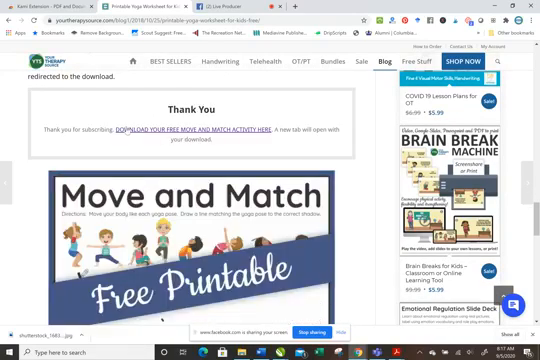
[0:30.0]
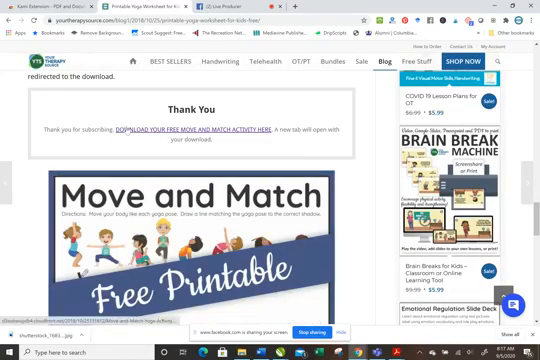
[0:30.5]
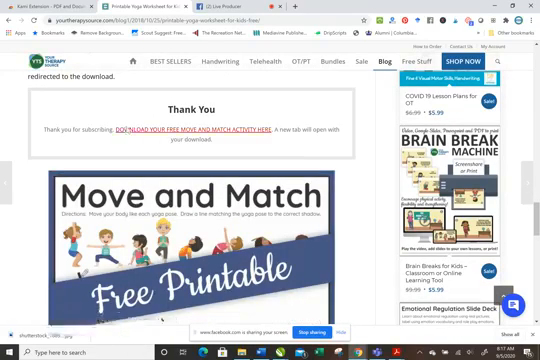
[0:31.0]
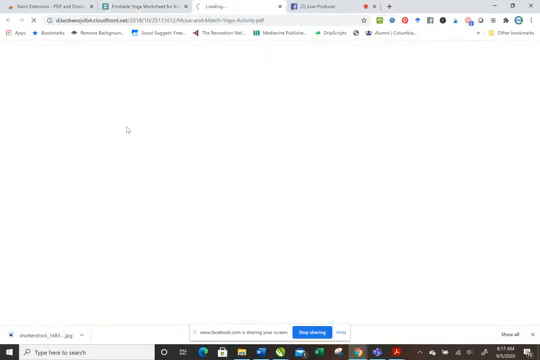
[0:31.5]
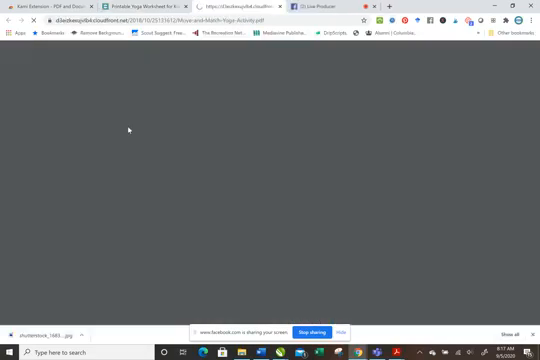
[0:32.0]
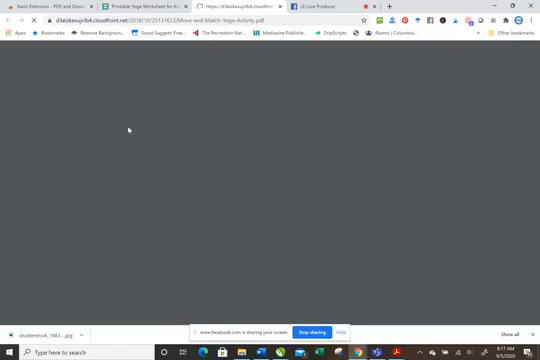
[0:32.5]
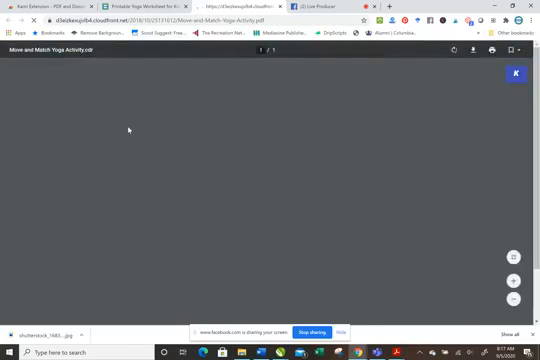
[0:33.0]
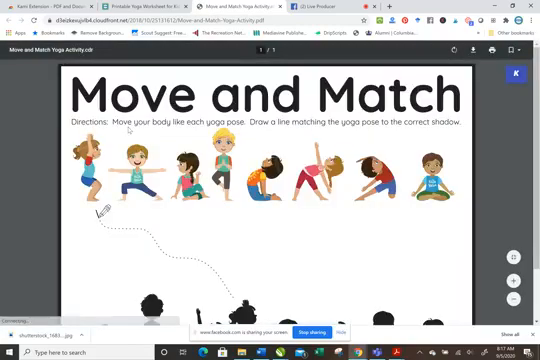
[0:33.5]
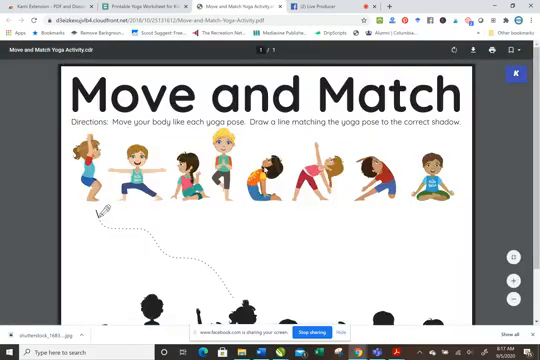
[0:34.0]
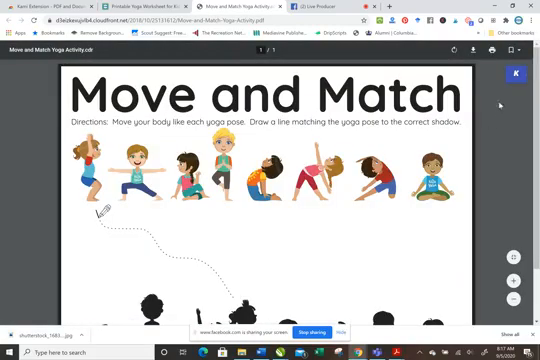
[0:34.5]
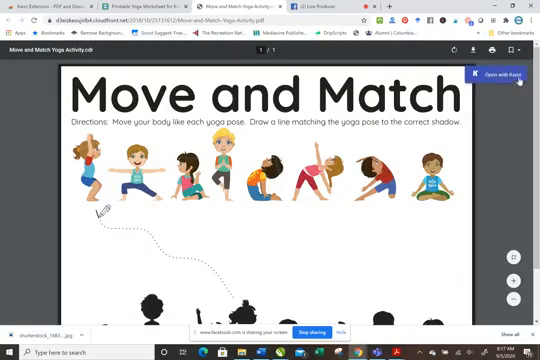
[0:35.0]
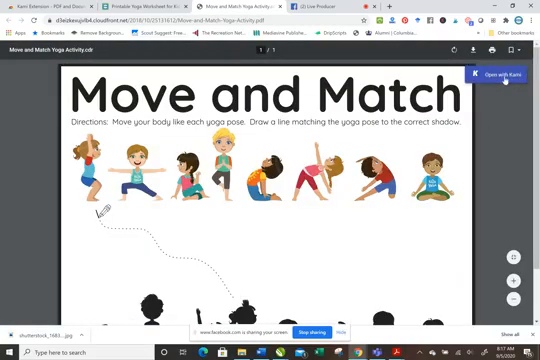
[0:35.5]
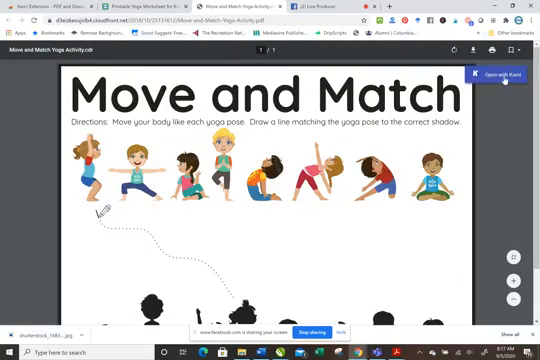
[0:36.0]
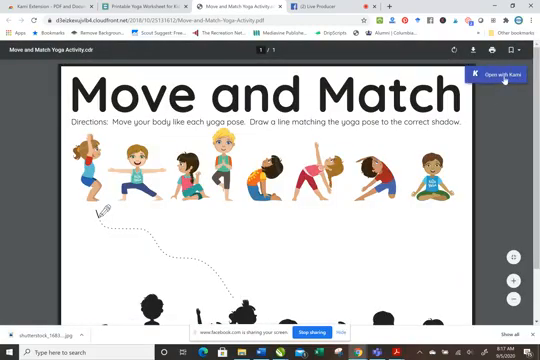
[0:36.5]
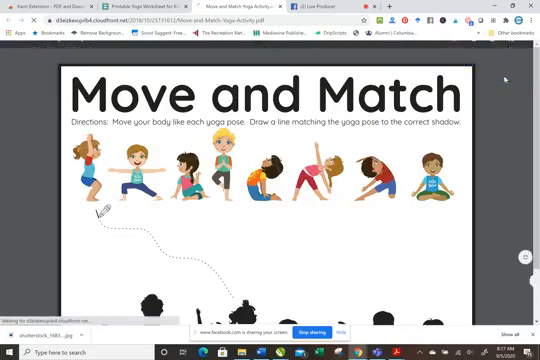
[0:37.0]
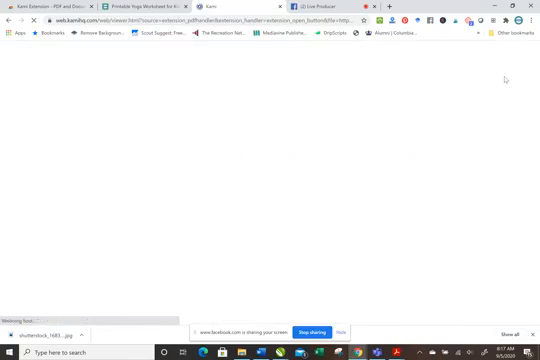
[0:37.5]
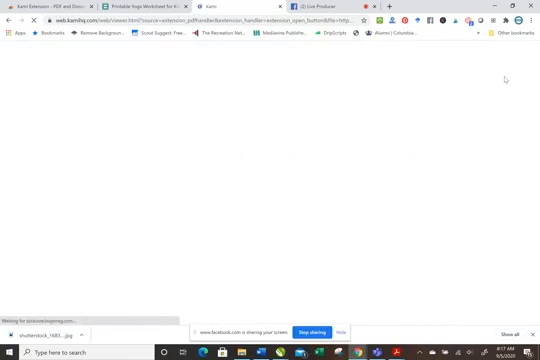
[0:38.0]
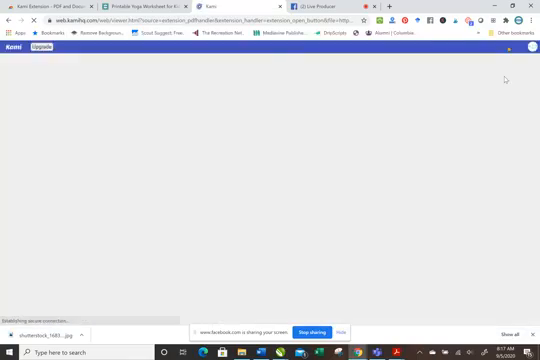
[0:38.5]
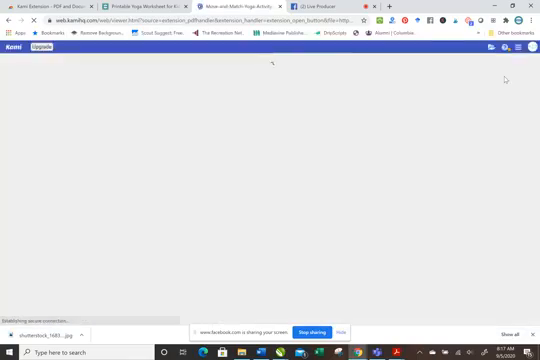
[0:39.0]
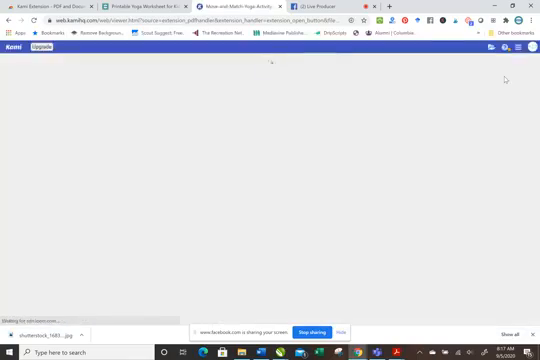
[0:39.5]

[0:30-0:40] The free Move and Match yoga activity has been clicked on, and it shows multiple yoga poses. Its directions include "move your body like each yoga pose" and "draw a line matching the yoga pose to the correct shadow", along with other activities. Right under the Move and Match title are multiple cartoon characters, 4 girls, 2 women and 2 boys, all doing different yoga poses. Below them are shadow outlines for the game of matching the poses to the shadows. Something is then clicked, and a tab for the extension opens.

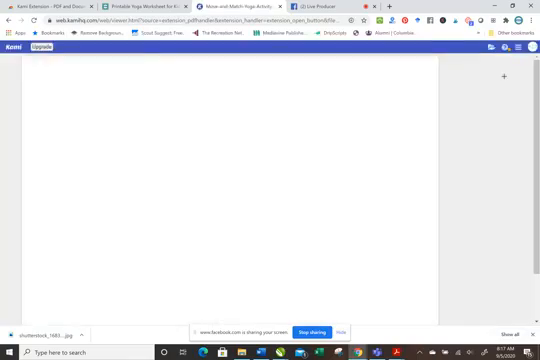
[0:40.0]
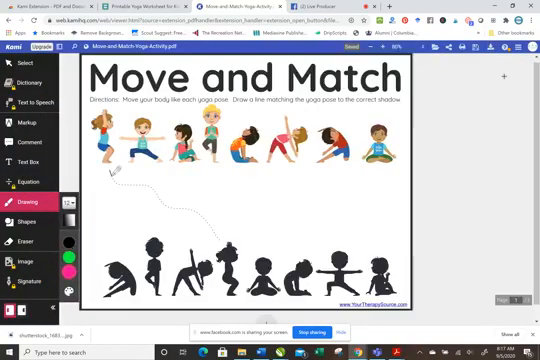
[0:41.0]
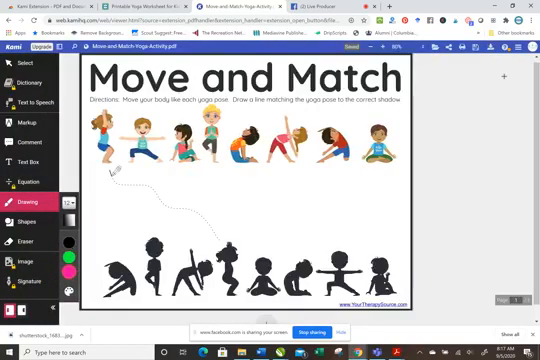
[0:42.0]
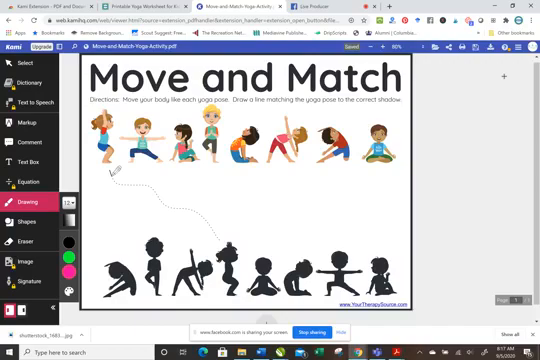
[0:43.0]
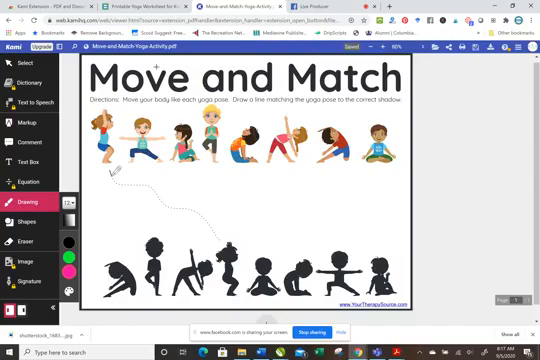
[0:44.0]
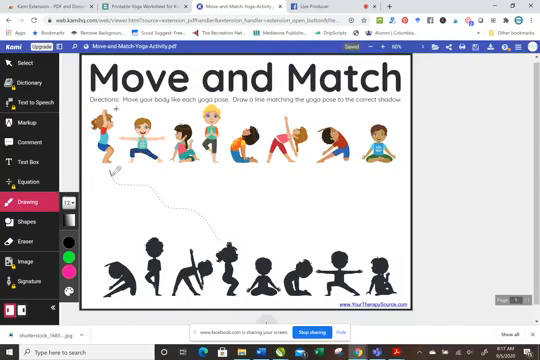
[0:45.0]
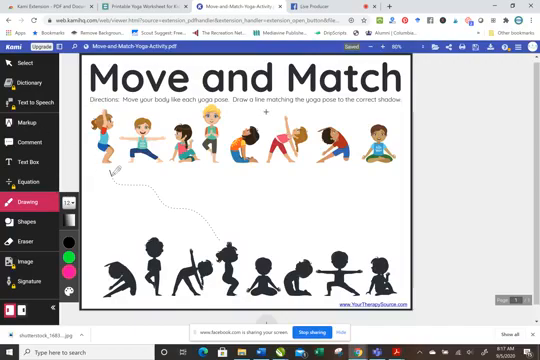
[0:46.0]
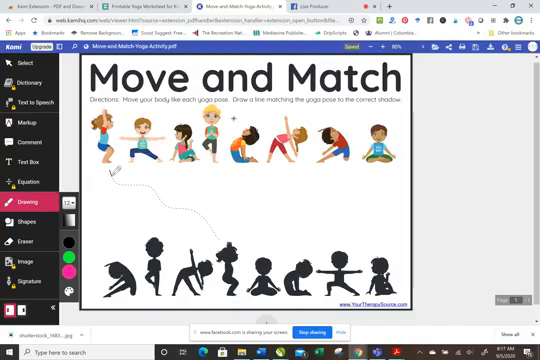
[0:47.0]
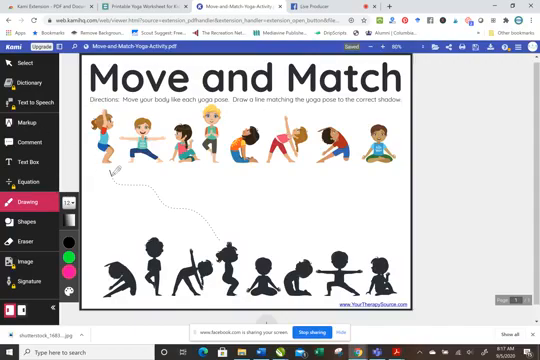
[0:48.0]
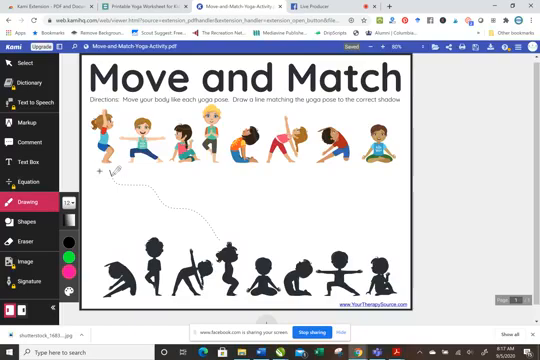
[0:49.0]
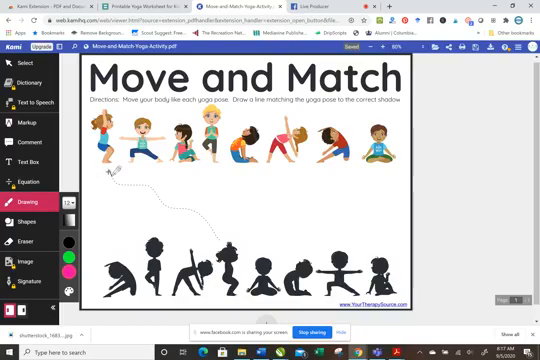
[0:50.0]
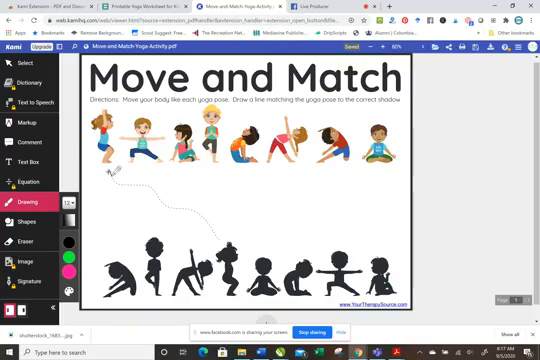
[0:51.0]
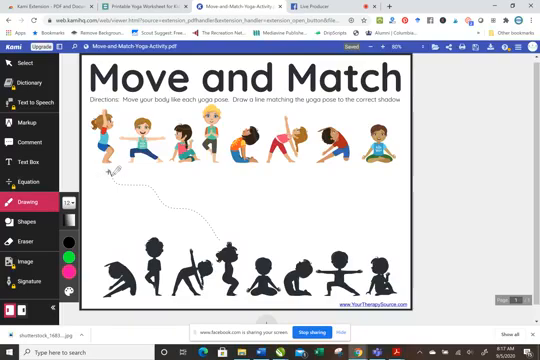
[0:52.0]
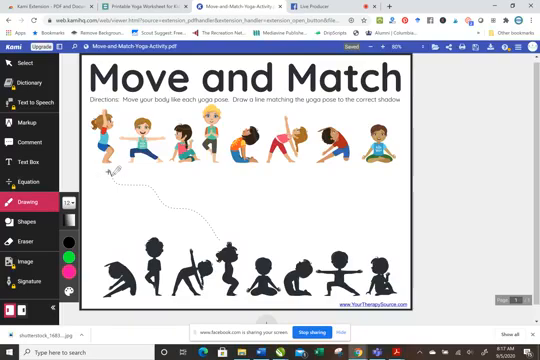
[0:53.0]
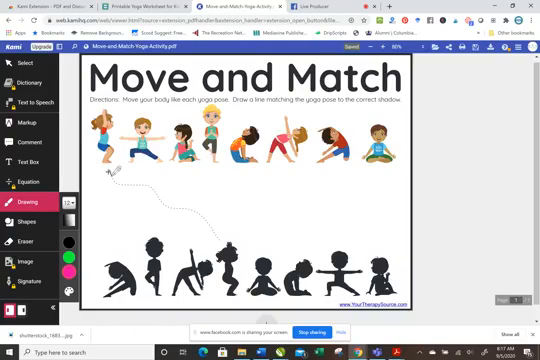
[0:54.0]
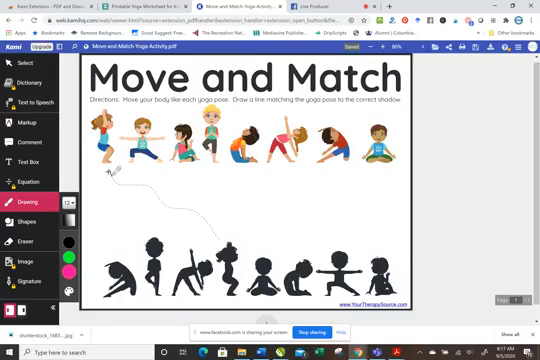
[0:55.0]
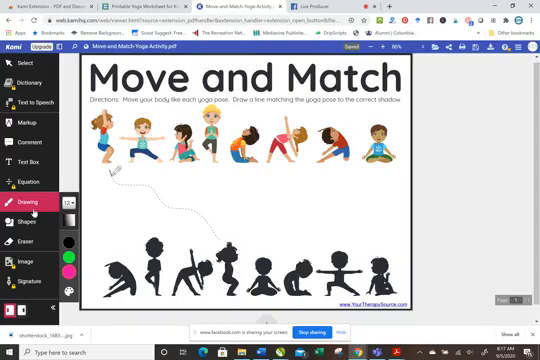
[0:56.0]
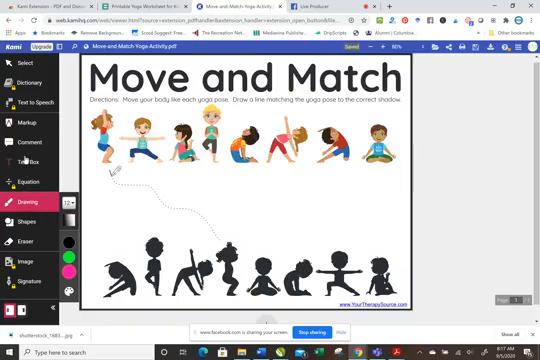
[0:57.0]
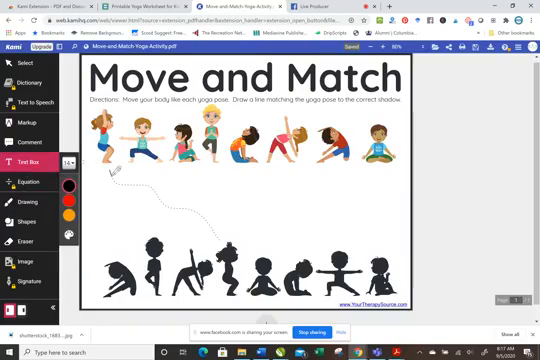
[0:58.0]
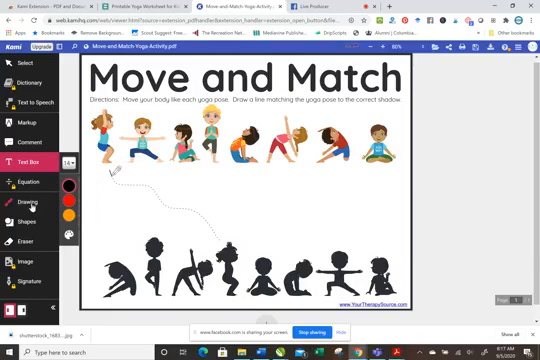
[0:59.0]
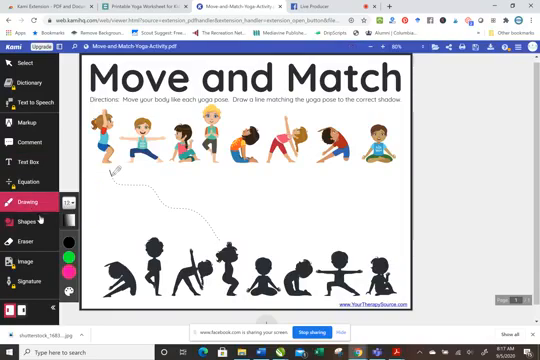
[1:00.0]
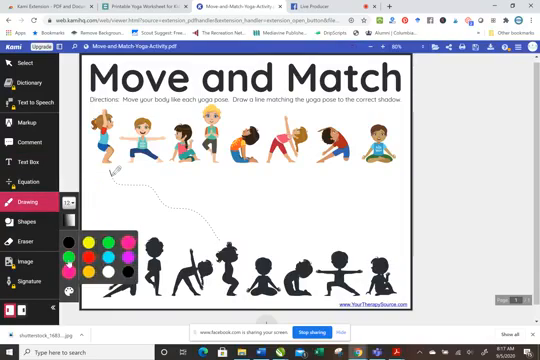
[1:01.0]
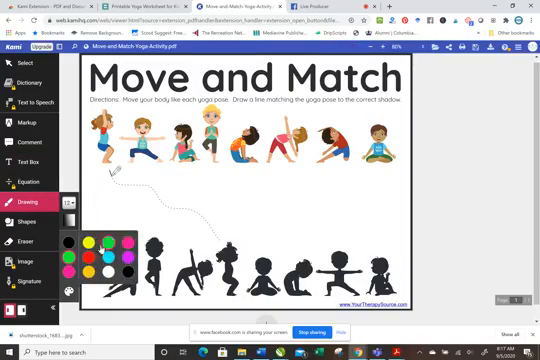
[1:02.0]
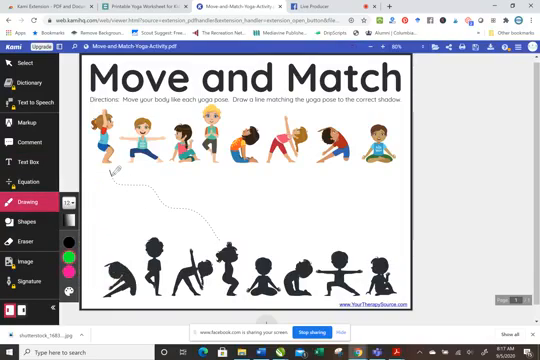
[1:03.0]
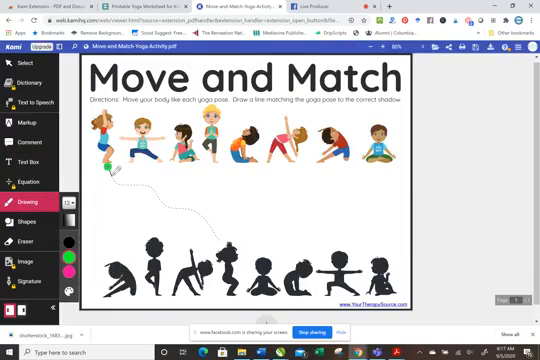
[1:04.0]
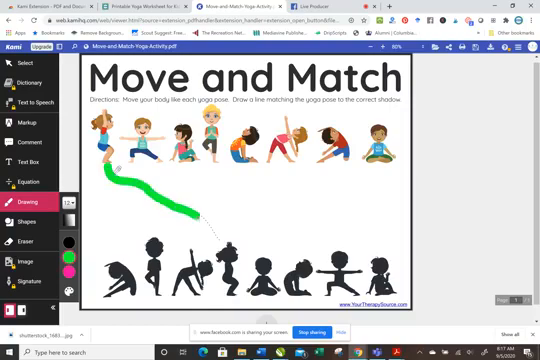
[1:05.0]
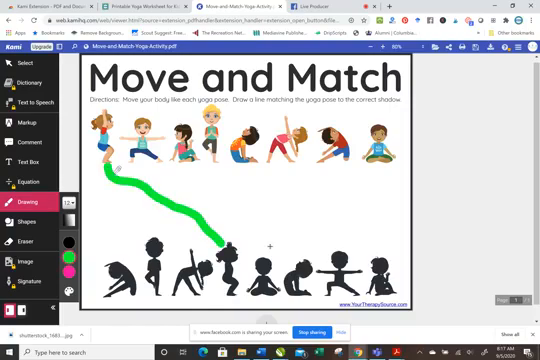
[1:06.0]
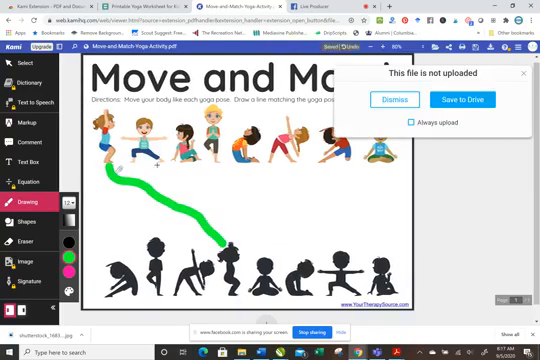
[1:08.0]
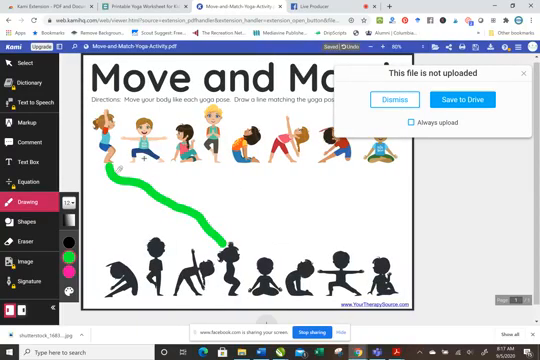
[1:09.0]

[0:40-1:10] The webpage is now Kami. The user puts the yoga printable file onto the page and opens the drawing section. Kami looks sort of like a photoshopping website, with other options on the left besides drawing, including text box, comment, equation, shapes, eraser, image and signature. The user starts by highlighting the example that was already done on the page, marking its dotted line in green. The drawing color is primarily pink by default, and the user changes it, choosing green for the first pose. A pop-up is dismissed, and the user works on matching the poses with the shadows.